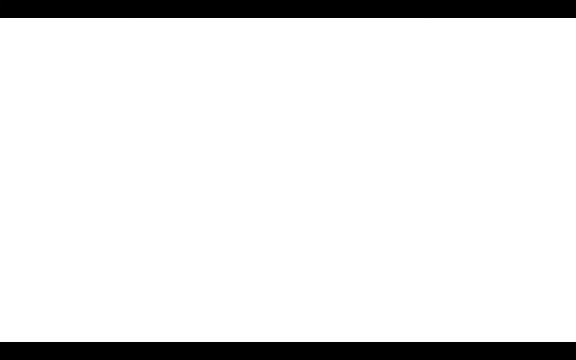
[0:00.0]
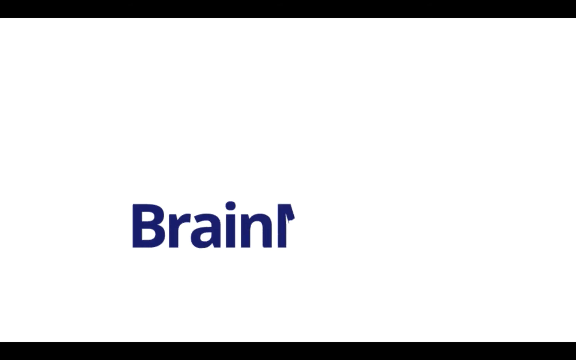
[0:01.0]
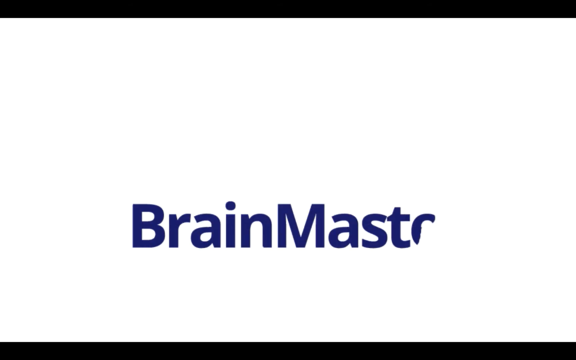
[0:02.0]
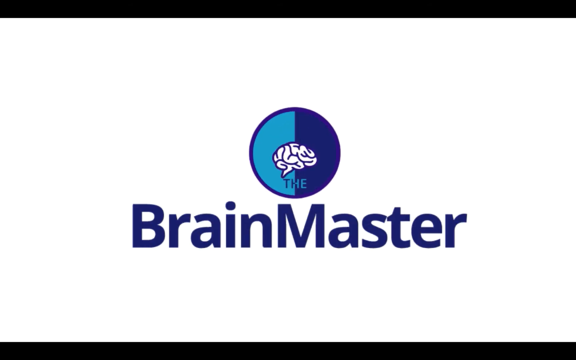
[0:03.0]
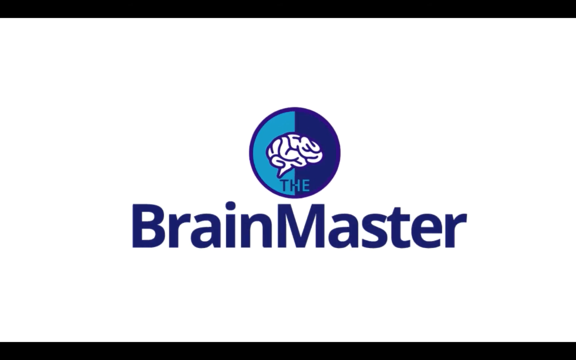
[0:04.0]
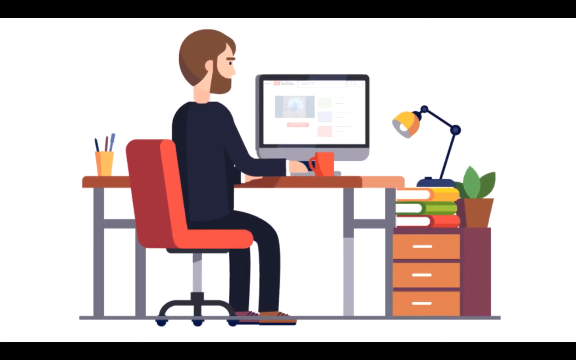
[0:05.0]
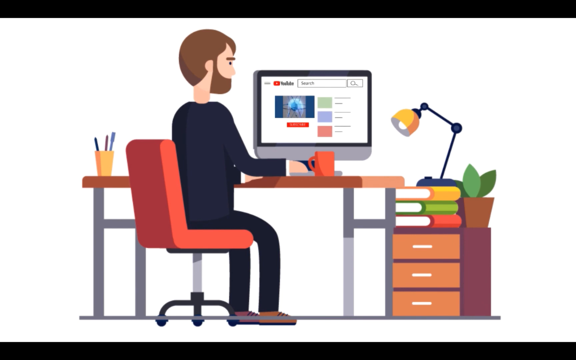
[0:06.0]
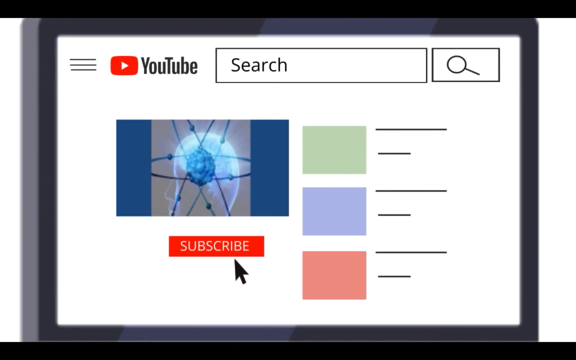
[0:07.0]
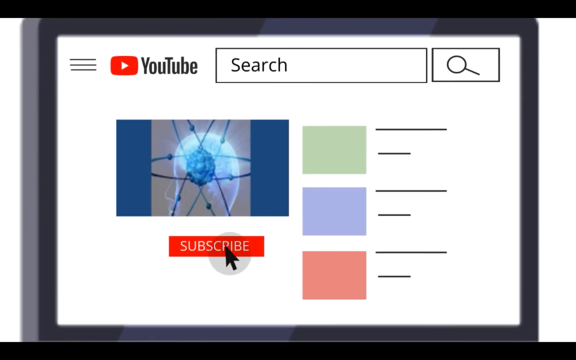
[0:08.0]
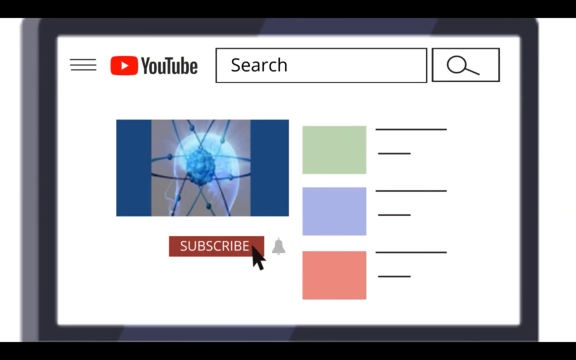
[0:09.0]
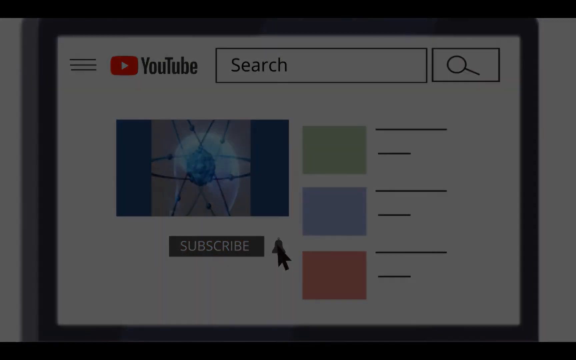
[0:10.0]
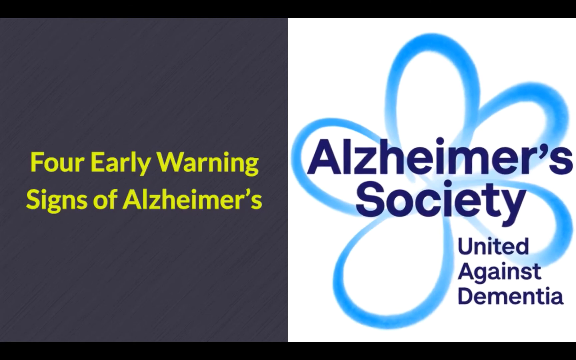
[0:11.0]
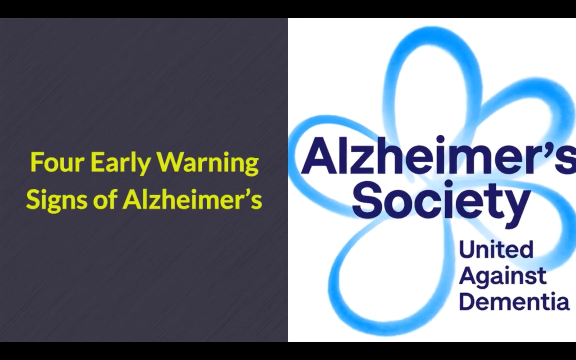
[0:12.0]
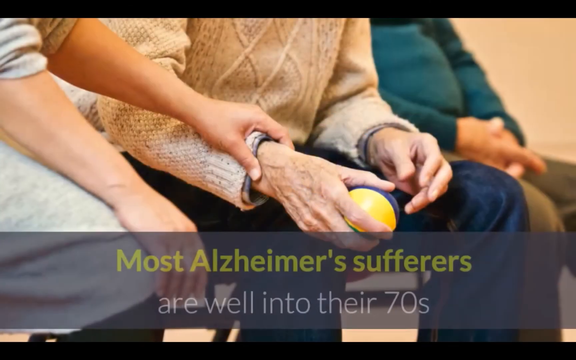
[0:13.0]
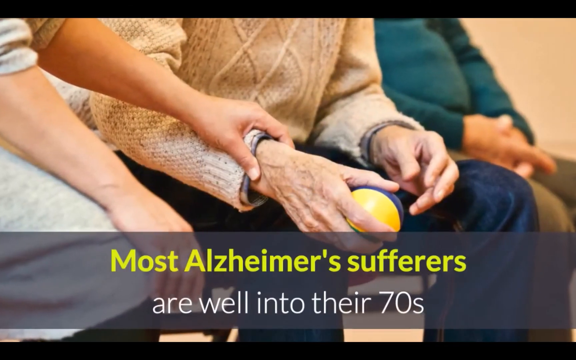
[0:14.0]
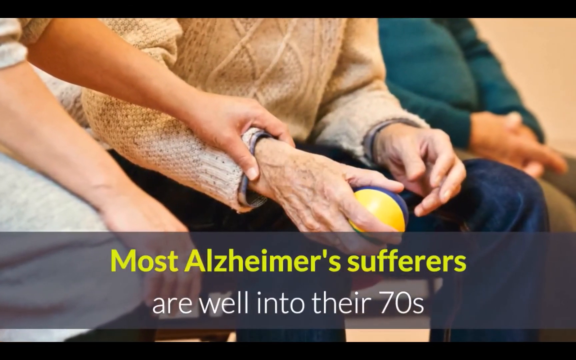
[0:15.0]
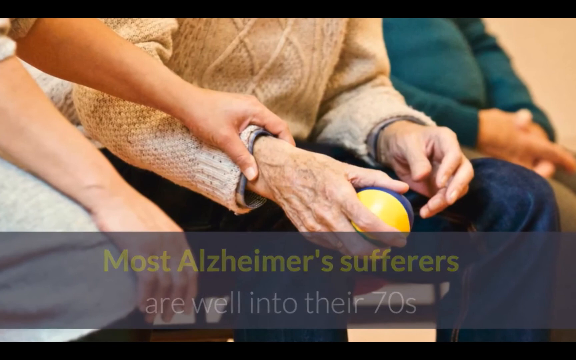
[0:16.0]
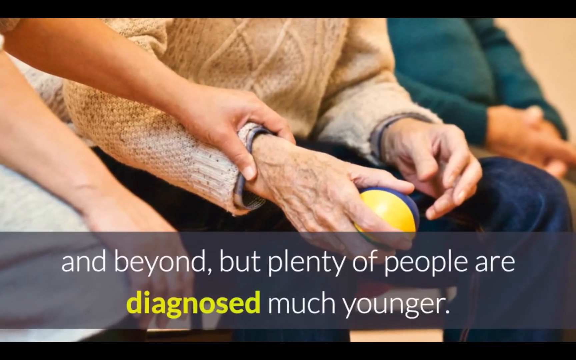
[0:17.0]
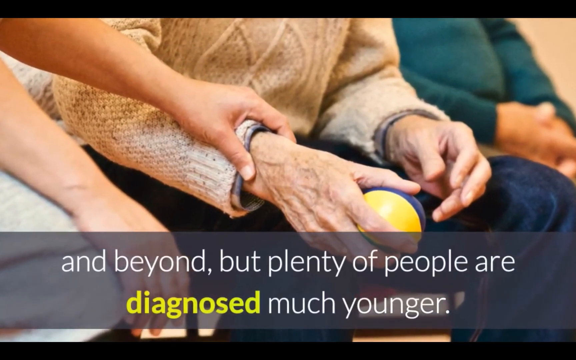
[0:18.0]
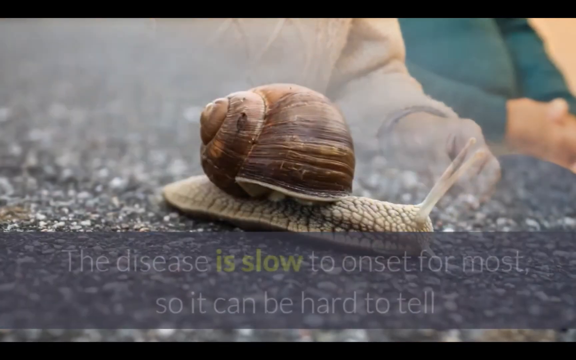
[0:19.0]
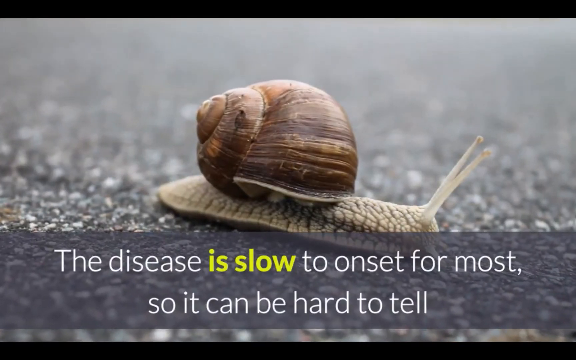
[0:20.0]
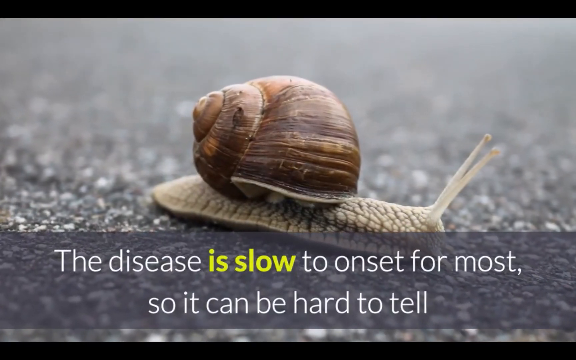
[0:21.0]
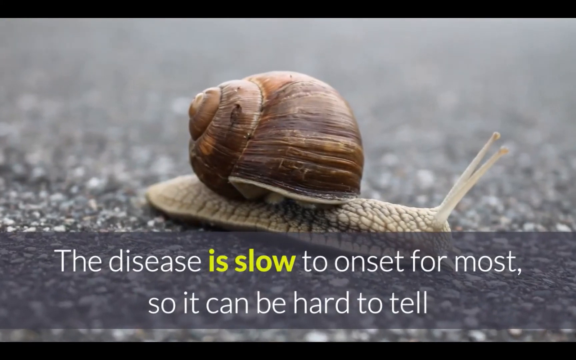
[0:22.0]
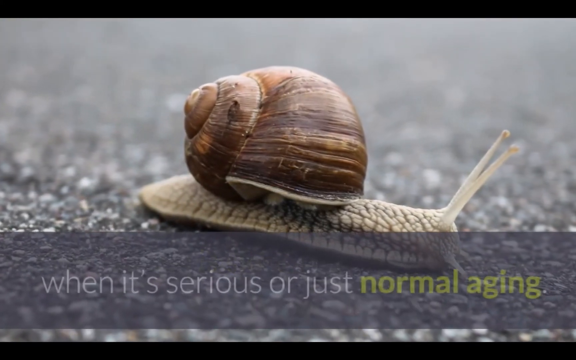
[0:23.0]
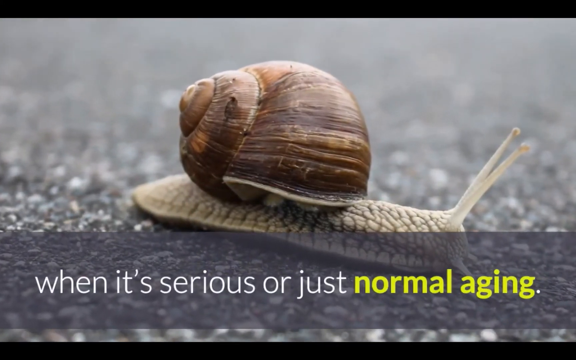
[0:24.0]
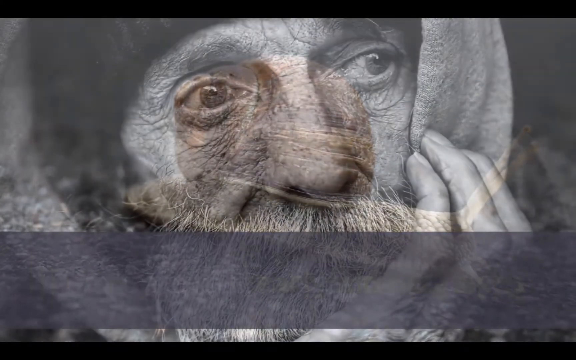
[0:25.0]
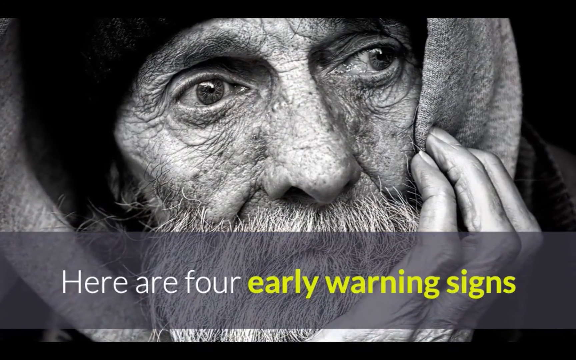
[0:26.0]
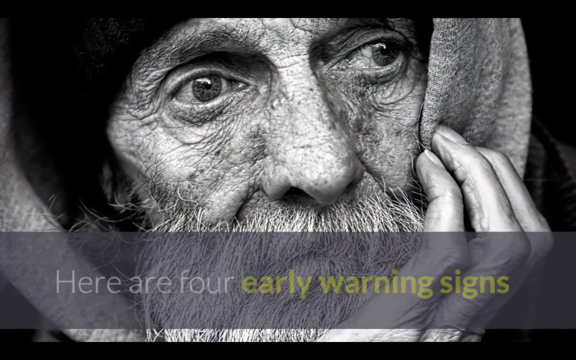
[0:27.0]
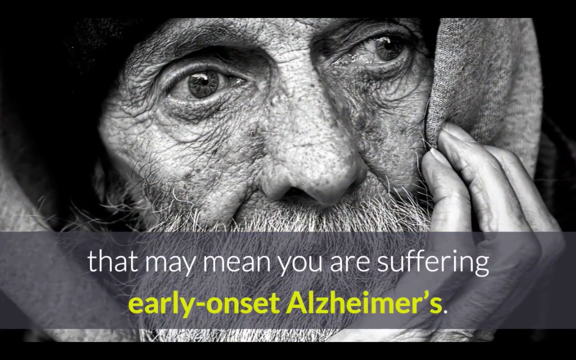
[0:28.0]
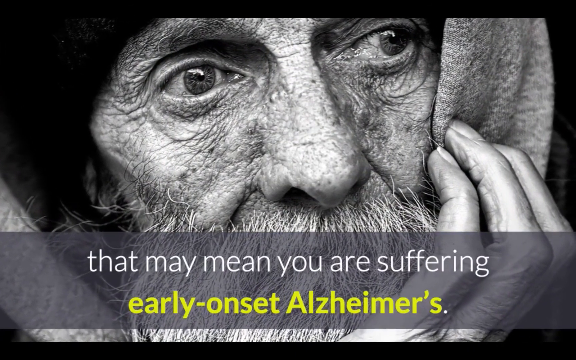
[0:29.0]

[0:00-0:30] On a white background are the words "brain master," with a circle containing a brain above them. The scene slides to a man sitting on a chair, busy with a computer. There is a cup on the table, three books in red, green and yellow, and a light. On the computer he is on YouTube, subscribing, and the YouTube search bar is visible. The scene slides to a page with two columns: one side has a dark gray background with yellow text reading "for early warning signs of alzheimer," and the other side is white with a slight blue tint and reads "alzheimer society against dementia." Three people are sitting; one of them holds an old person's hand, and the person in the middle holds a ball. A snail appears with the message that the disease is slow to onset for most, so it can be hard to tell. Finally, an old man looks worried.